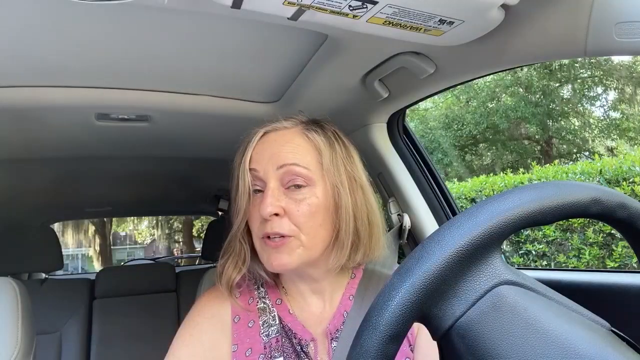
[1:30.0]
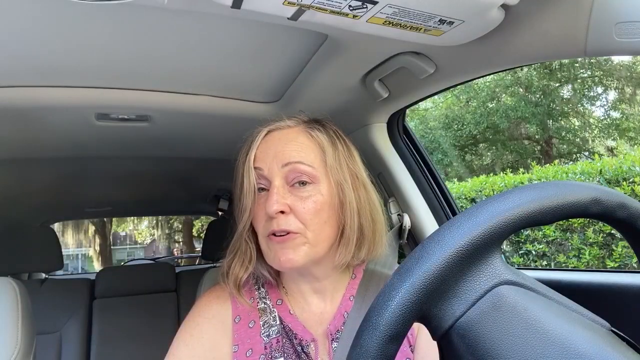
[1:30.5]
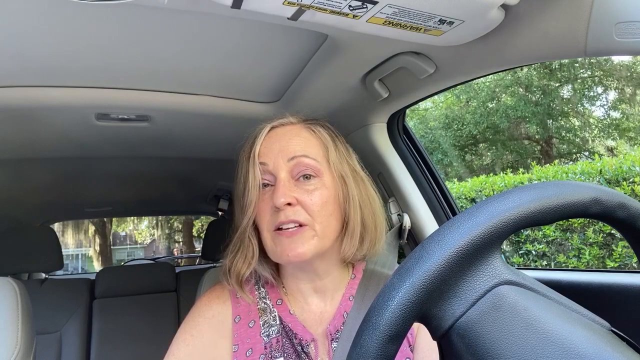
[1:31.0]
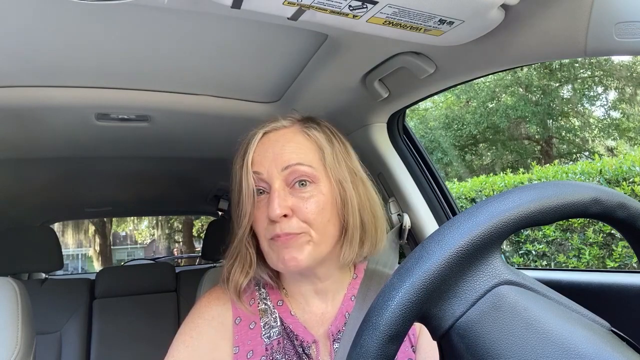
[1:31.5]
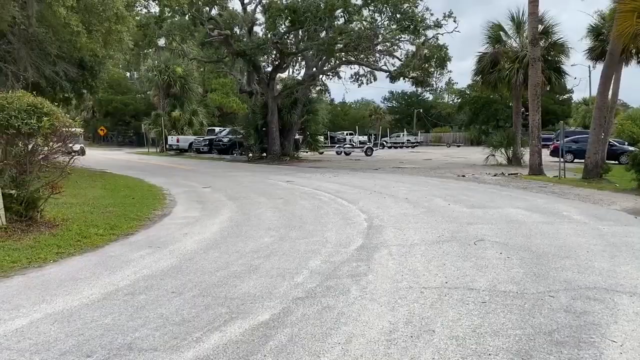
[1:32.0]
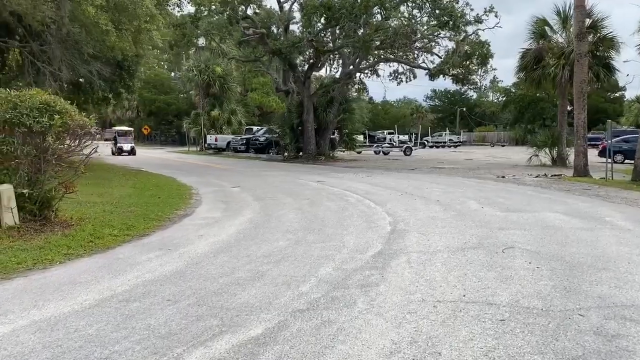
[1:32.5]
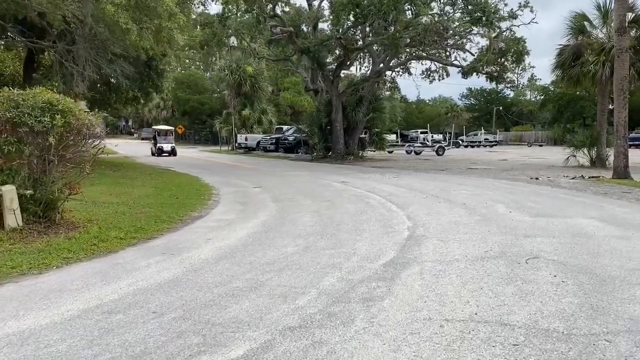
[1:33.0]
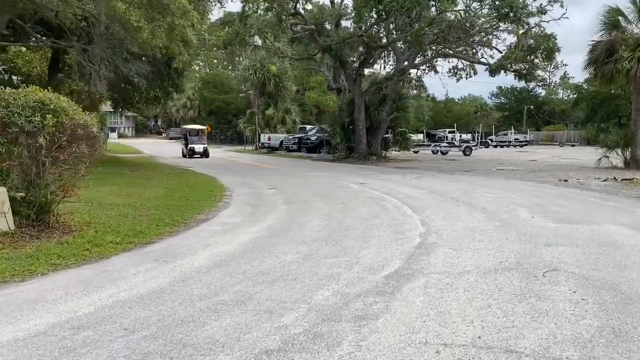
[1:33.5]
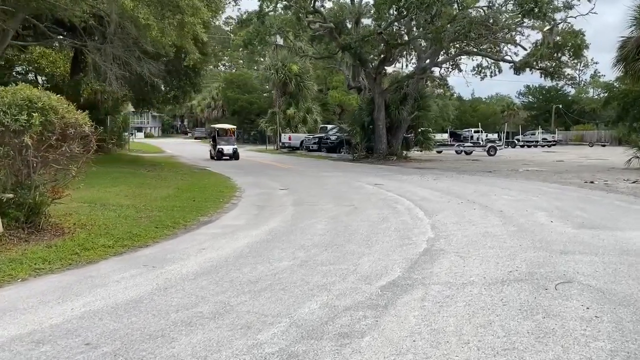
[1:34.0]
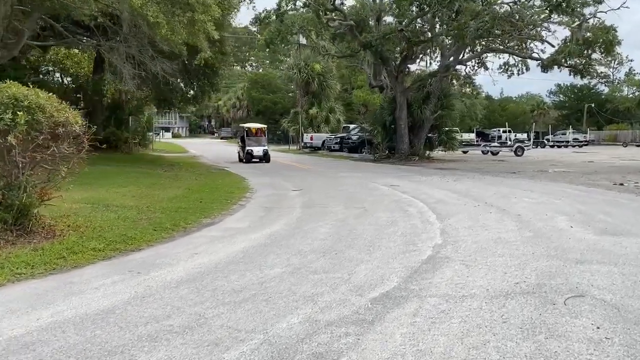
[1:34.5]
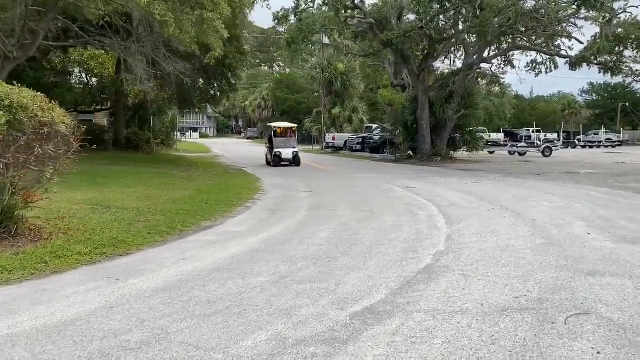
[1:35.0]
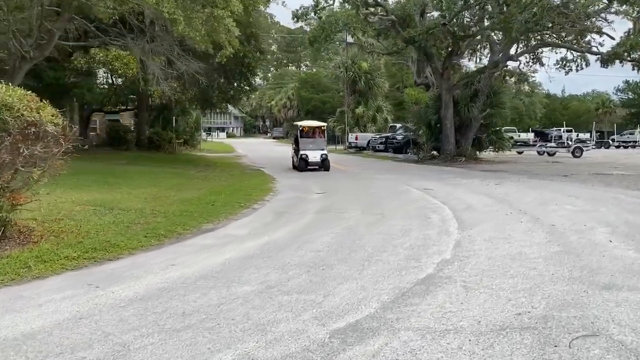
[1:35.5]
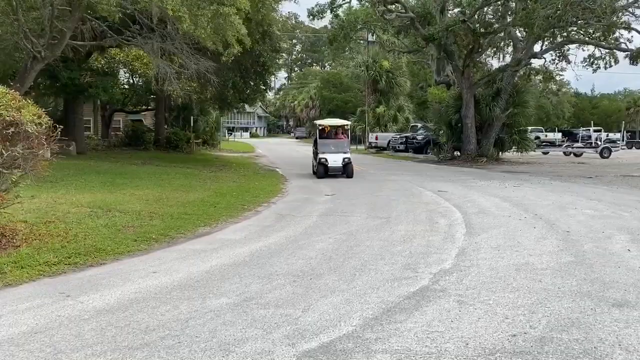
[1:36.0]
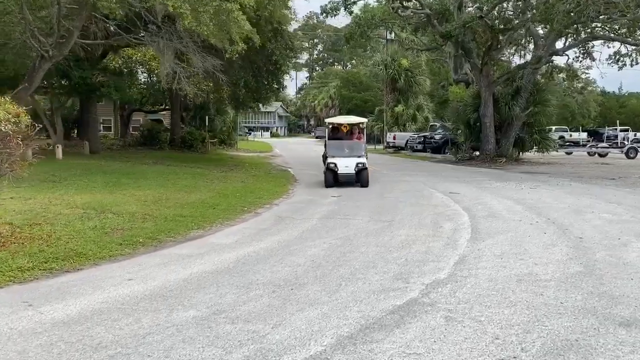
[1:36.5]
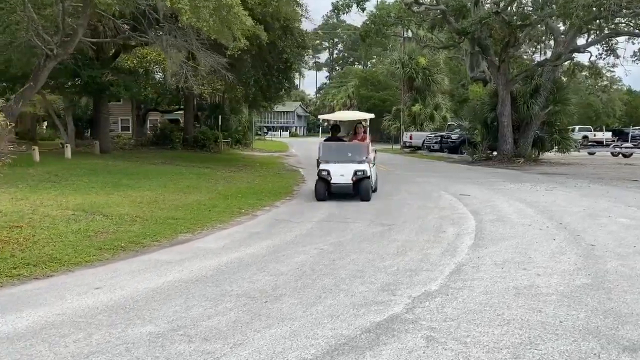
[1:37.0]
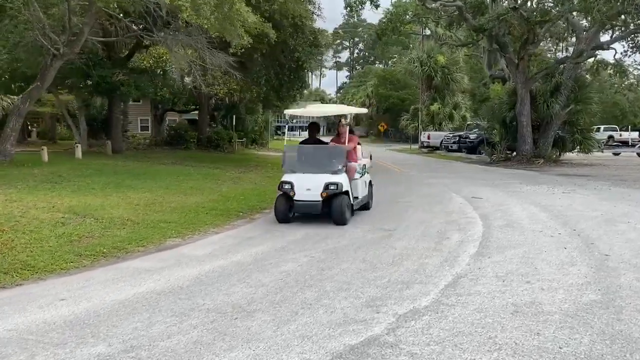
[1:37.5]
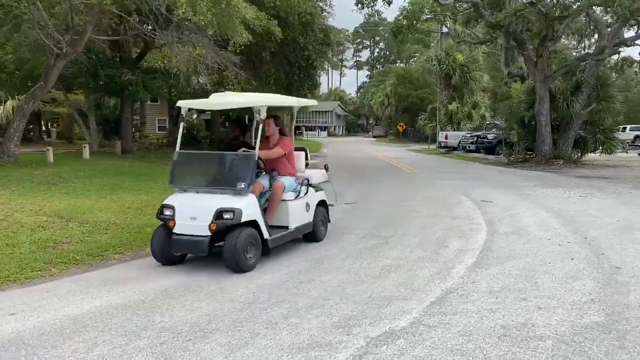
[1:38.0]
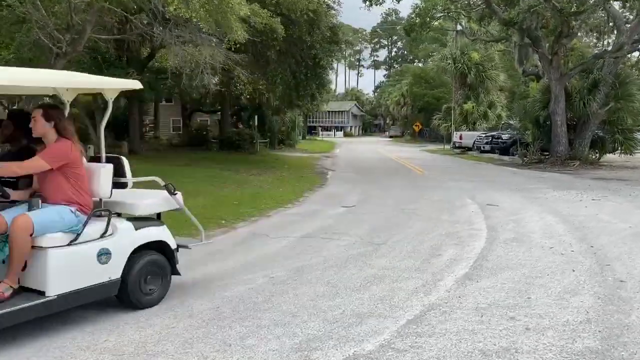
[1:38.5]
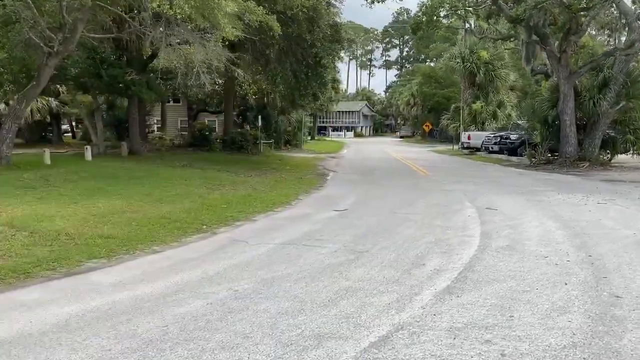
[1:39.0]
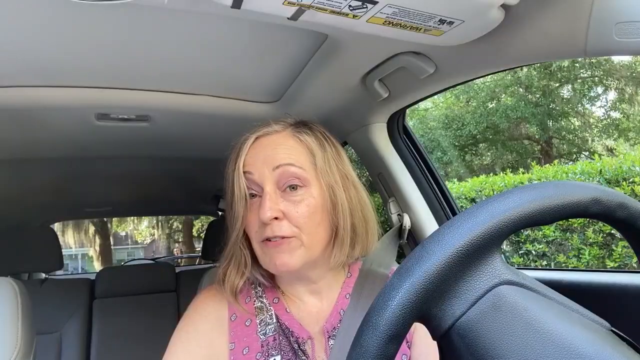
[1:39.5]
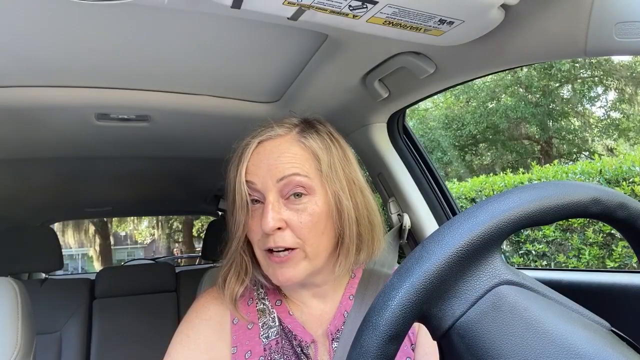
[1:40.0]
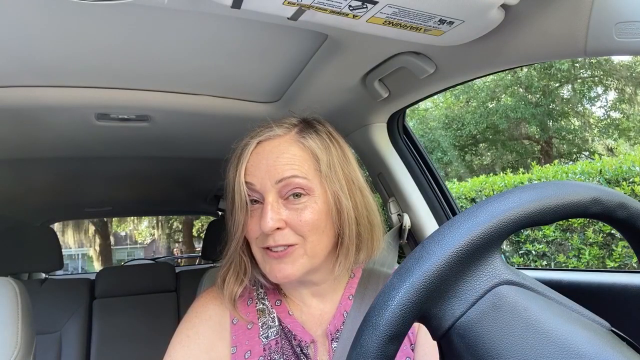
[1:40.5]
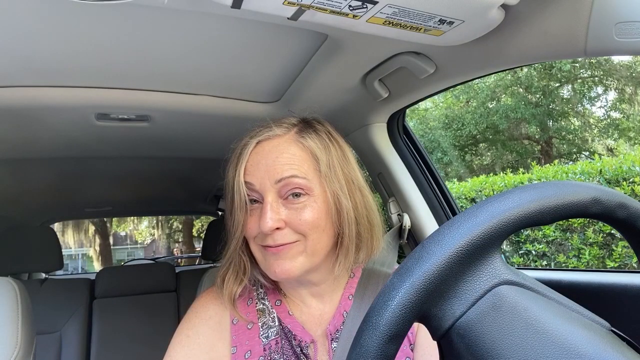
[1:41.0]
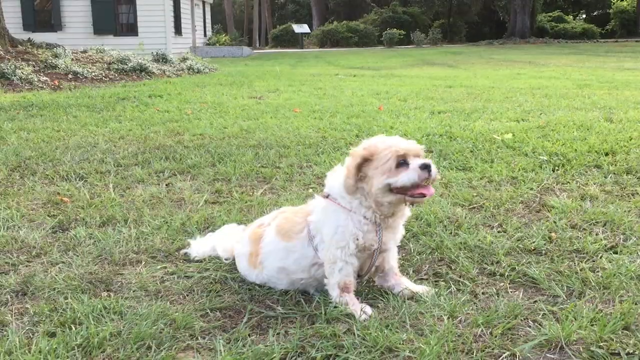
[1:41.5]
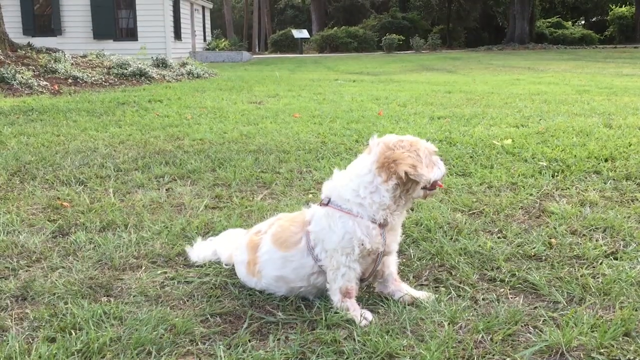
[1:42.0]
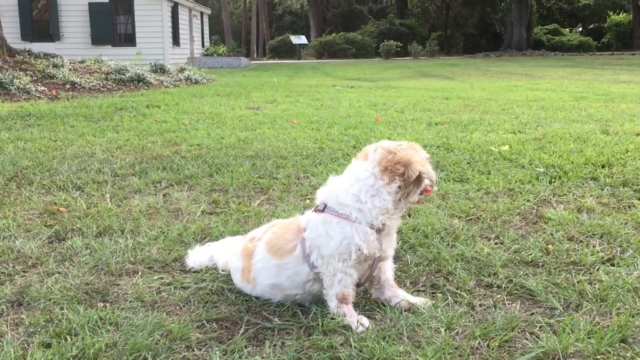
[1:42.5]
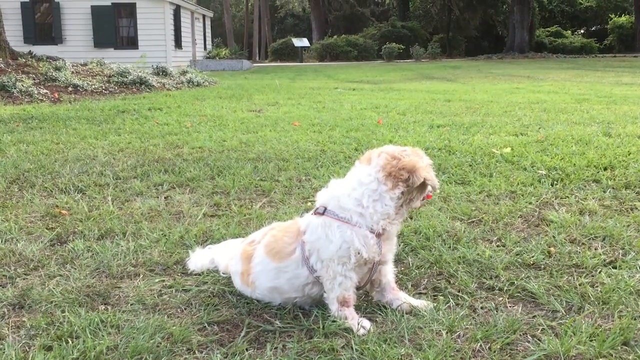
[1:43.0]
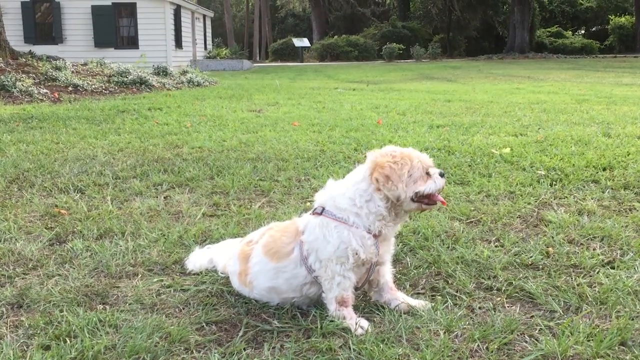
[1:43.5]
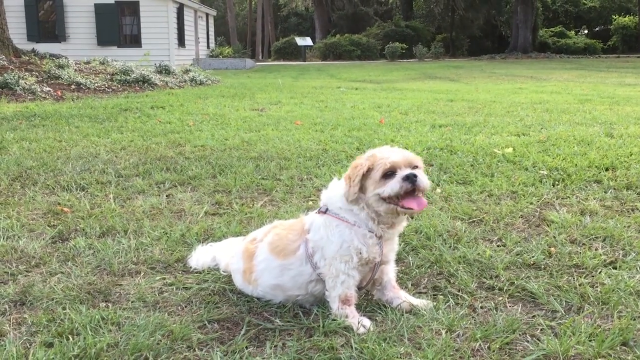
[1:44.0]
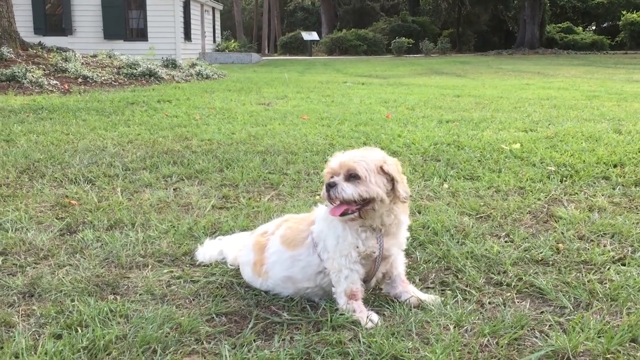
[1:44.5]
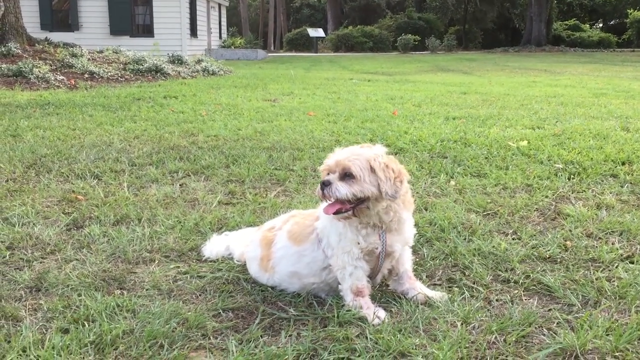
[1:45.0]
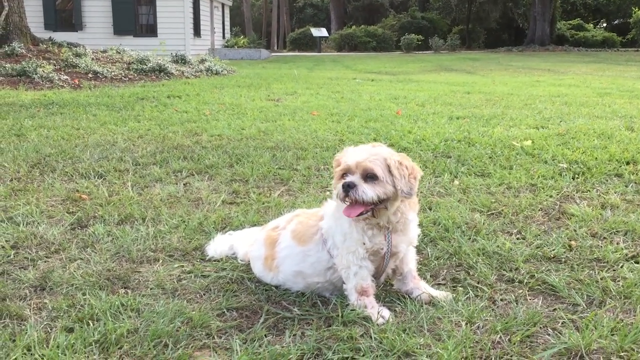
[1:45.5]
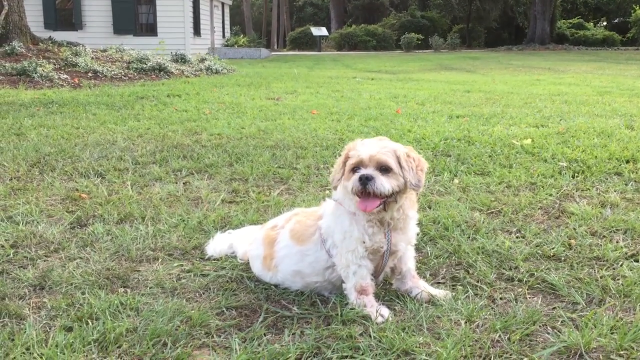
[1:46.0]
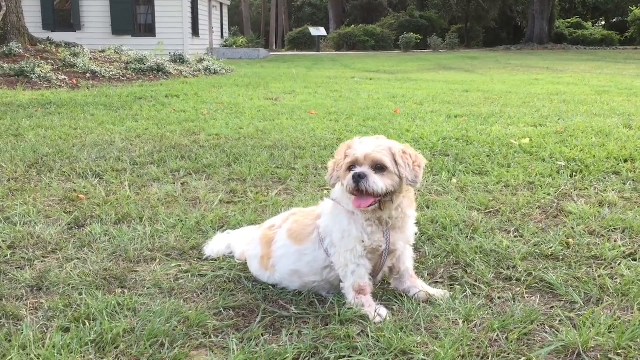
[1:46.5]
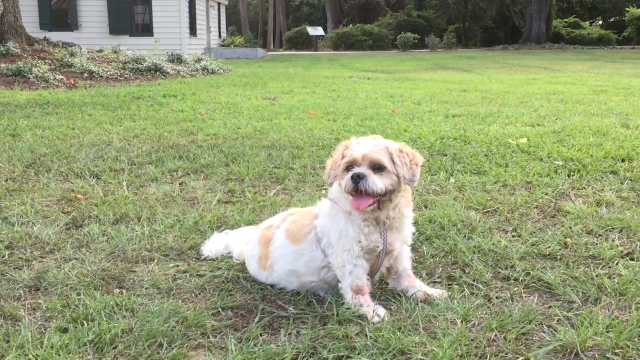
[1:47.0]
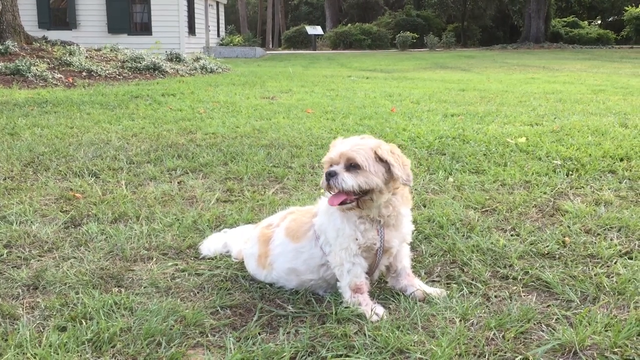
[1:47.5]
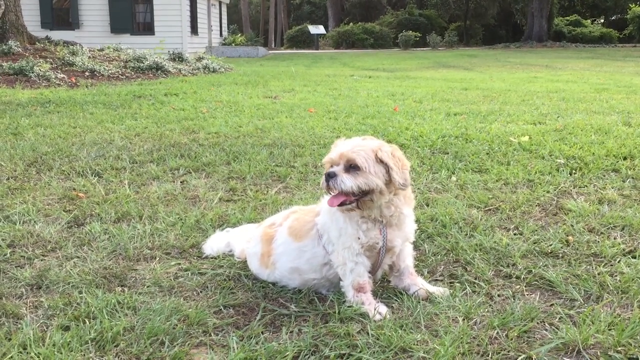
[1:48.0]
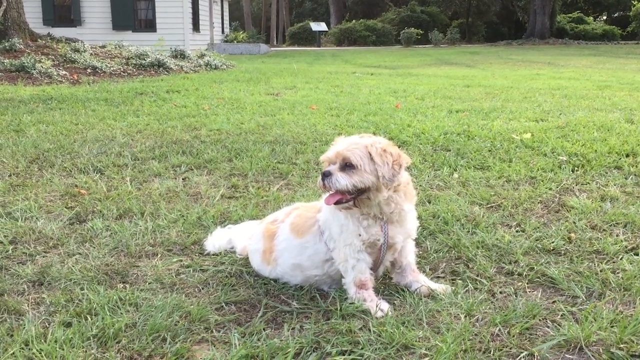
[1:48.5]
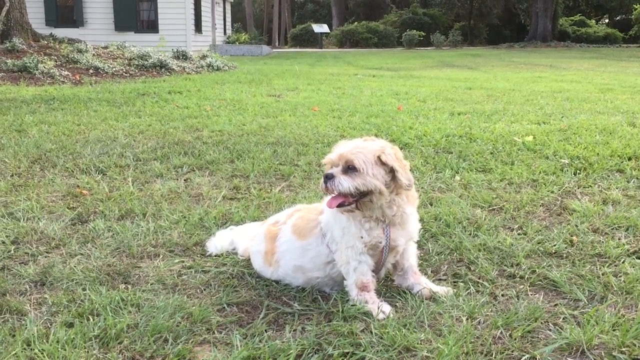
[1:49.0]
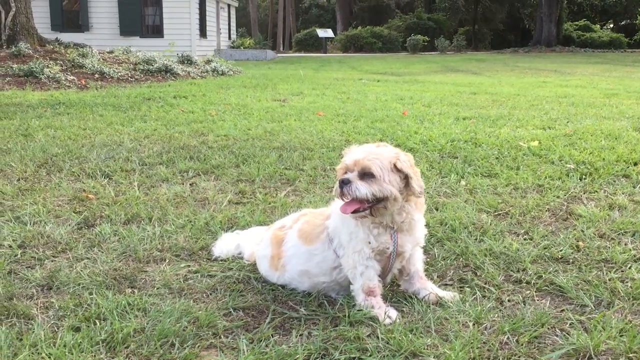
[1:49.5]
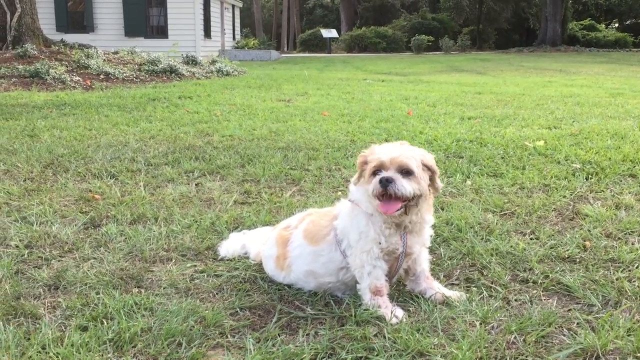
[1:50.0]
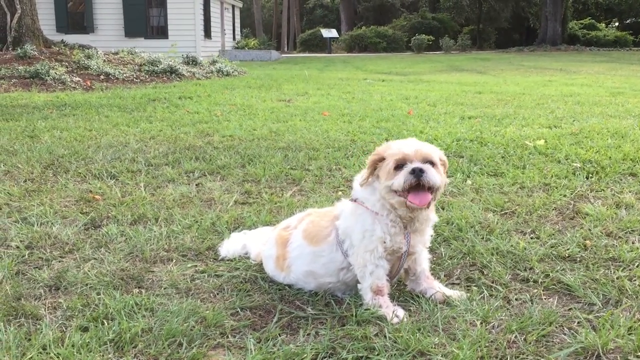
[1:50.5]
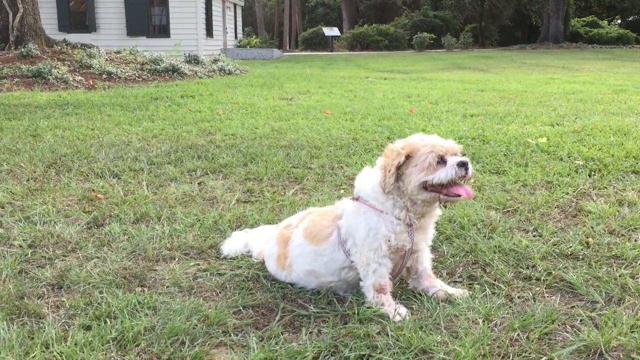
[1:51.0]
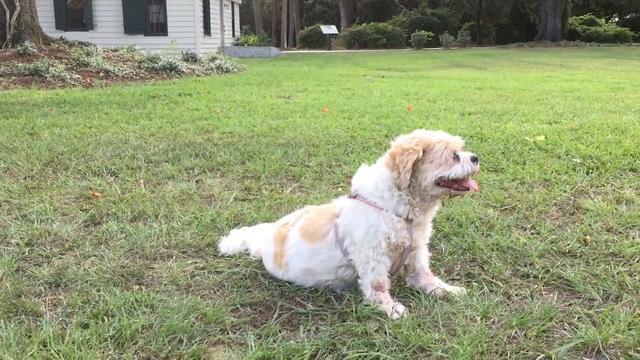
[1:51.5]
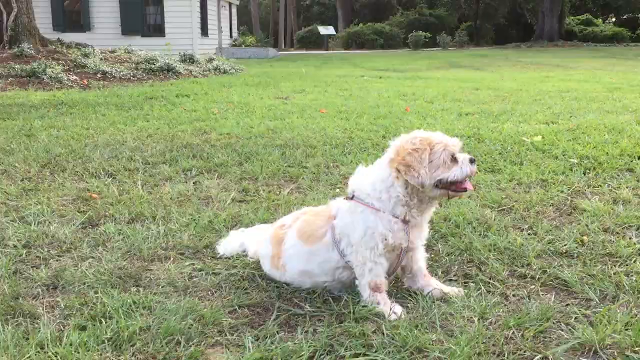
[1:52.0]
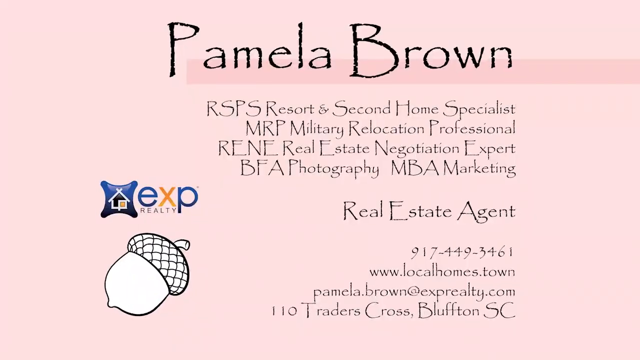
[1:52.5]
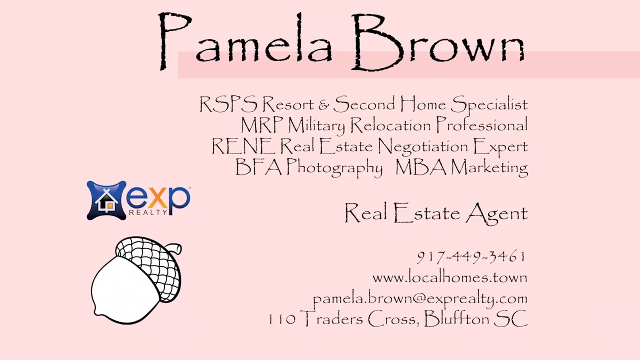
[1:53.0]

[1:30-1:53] A woman in a parked car talks into what seems like some type of dash cam. She is seen from the chest up and speaks for only a few seconds; she doesn't use her hands, just talks and kind of turns her head slightly. Next, a golf cart comes down a wide road with a lot of greenery around it; the grass is very green and the trees are very green. The camera kind of moves off to the right, and the golf cart comes around the bend and moves out of the frame. Back inside the car, the woman is still talking into the camera. She looks like she is smiling, and her hair is hanging down in her face on the right side. After a couple of seconds, a shot looks at a yard where a dog is sitting and panting. It looks pretty content and happy. It turns its head to the right, kind of looks off in the distance and flickers its ears while it continues to pant and kind of look around.